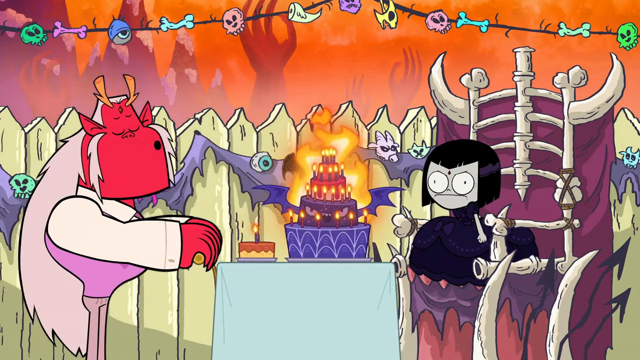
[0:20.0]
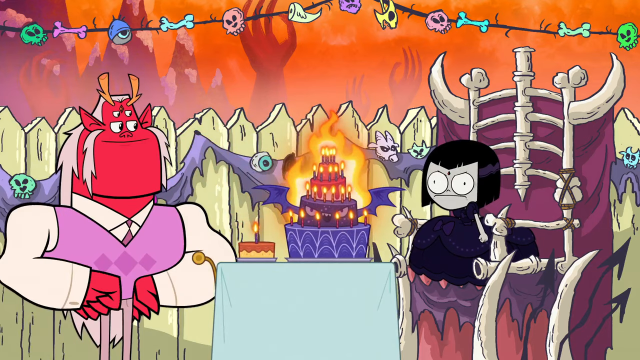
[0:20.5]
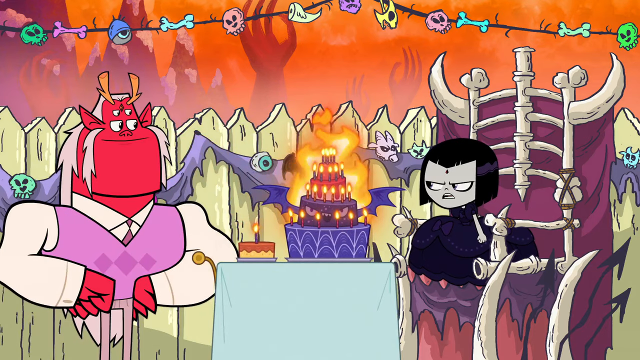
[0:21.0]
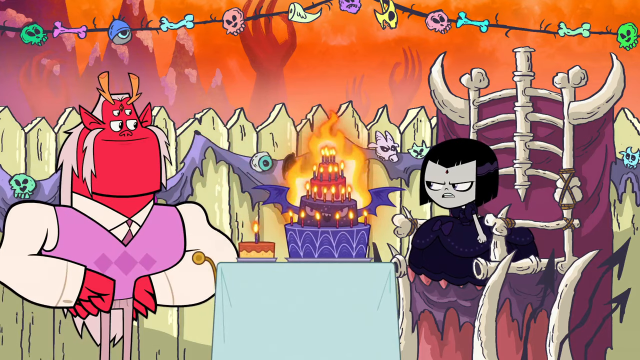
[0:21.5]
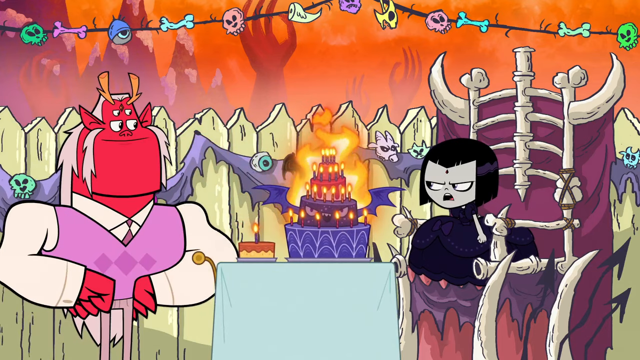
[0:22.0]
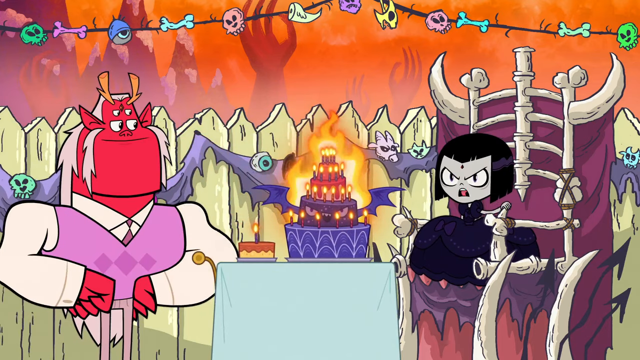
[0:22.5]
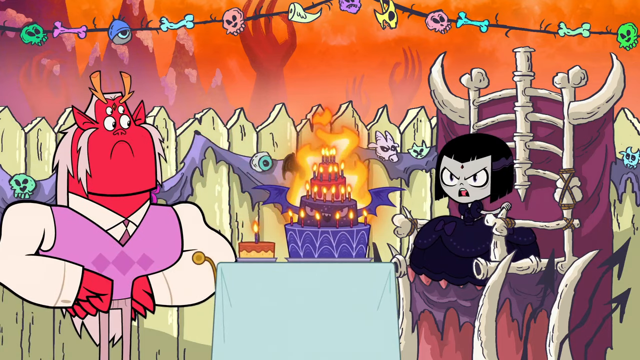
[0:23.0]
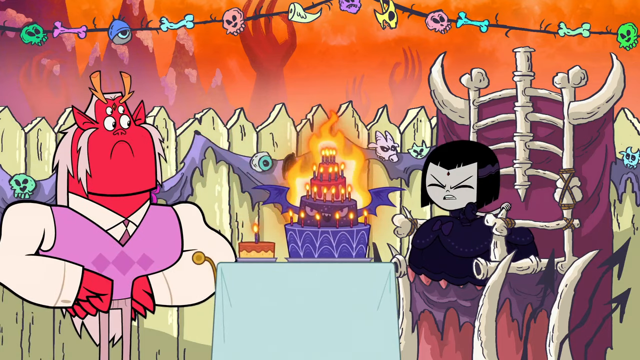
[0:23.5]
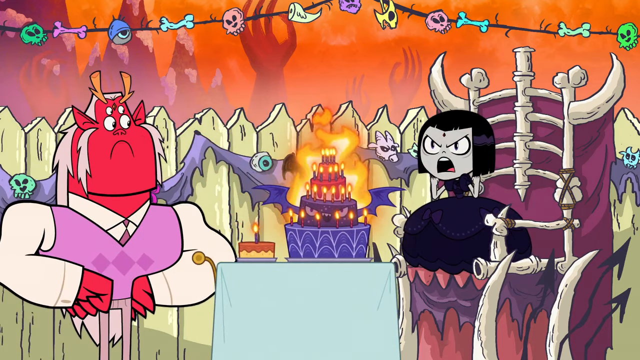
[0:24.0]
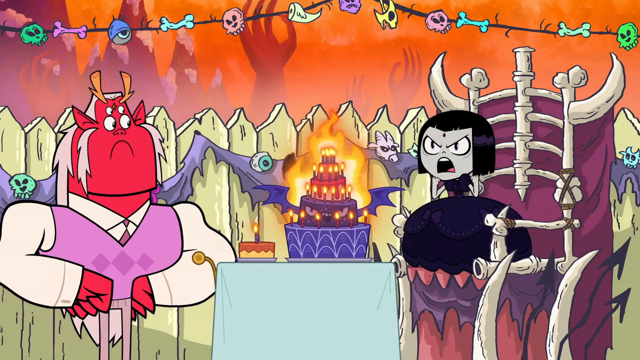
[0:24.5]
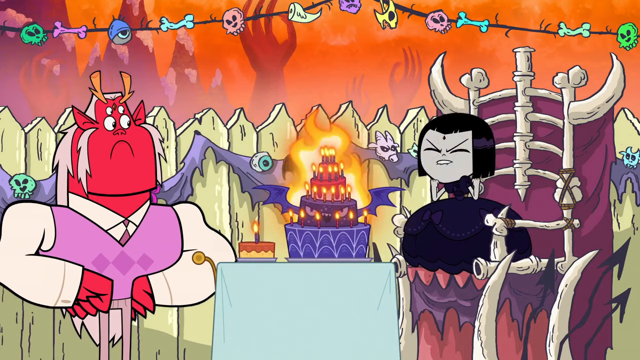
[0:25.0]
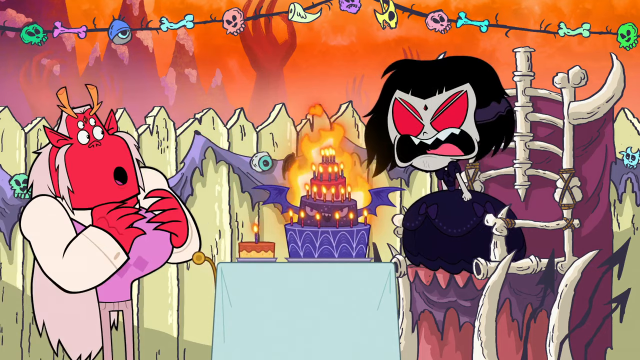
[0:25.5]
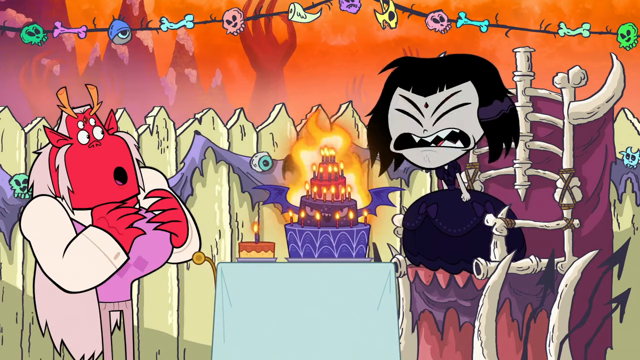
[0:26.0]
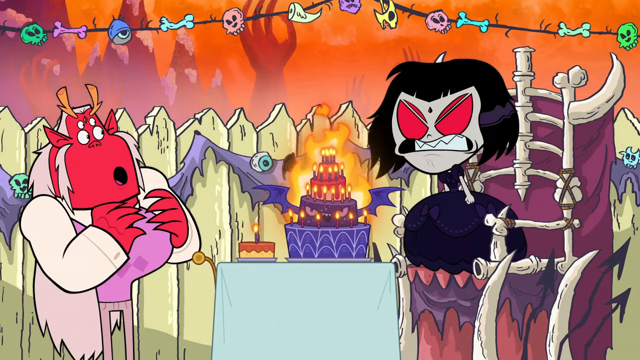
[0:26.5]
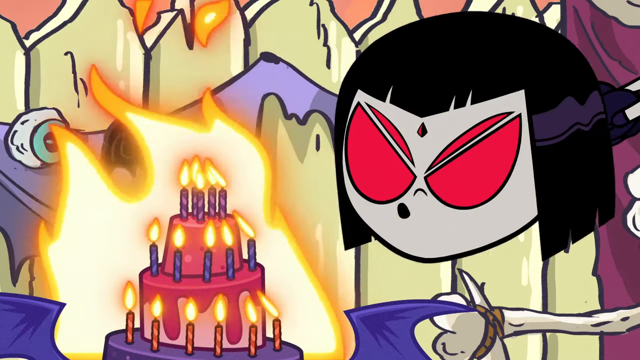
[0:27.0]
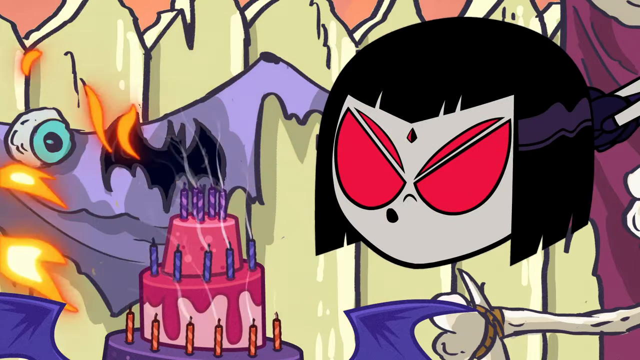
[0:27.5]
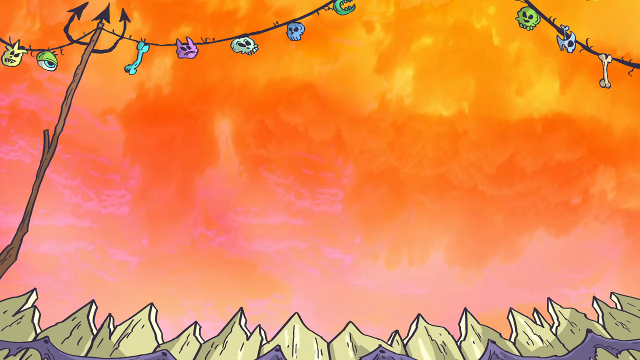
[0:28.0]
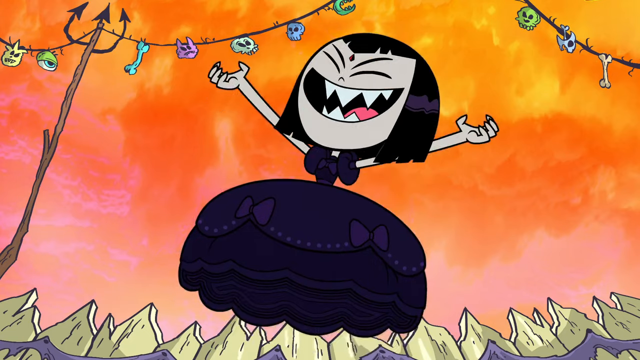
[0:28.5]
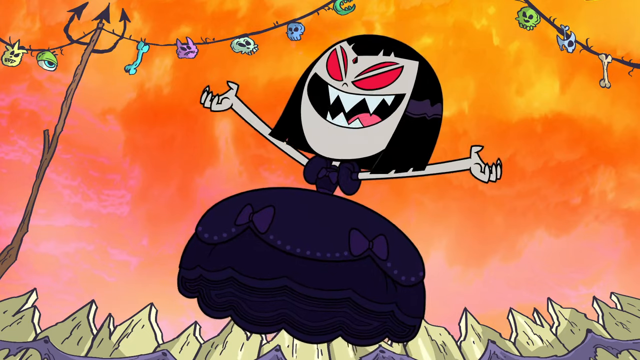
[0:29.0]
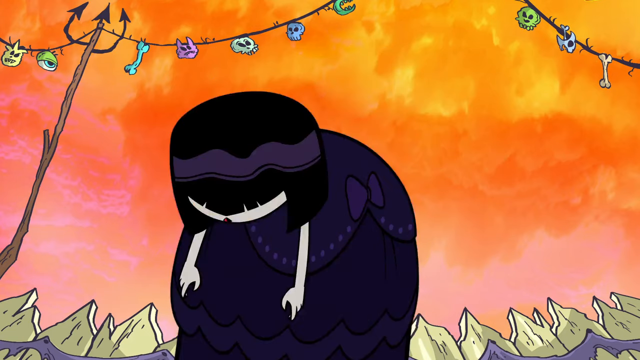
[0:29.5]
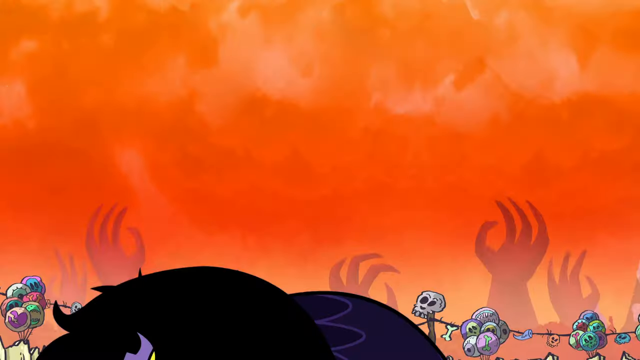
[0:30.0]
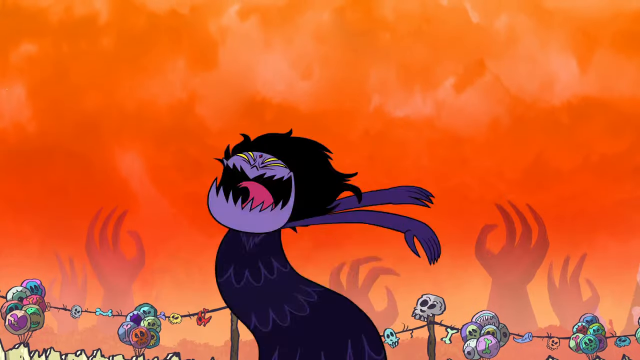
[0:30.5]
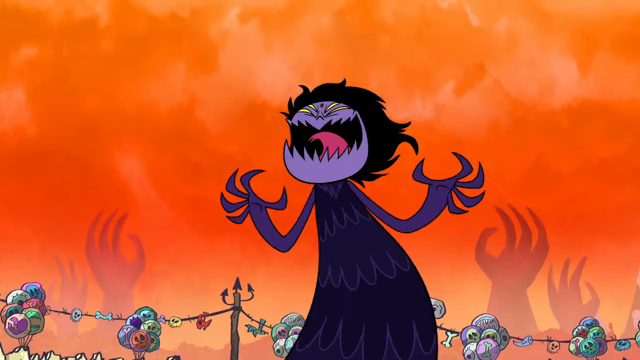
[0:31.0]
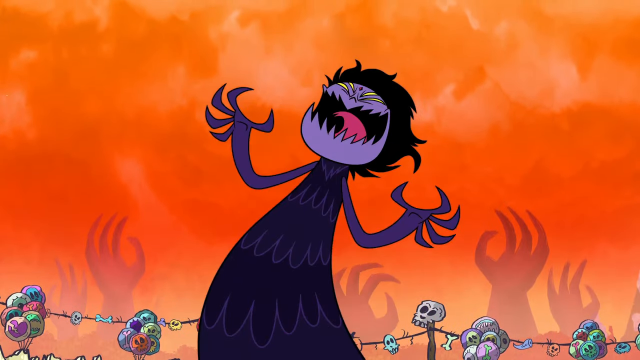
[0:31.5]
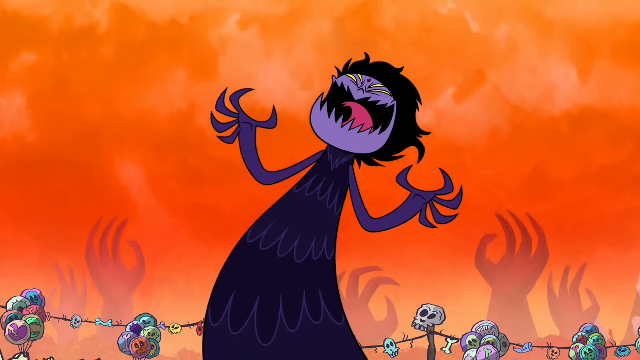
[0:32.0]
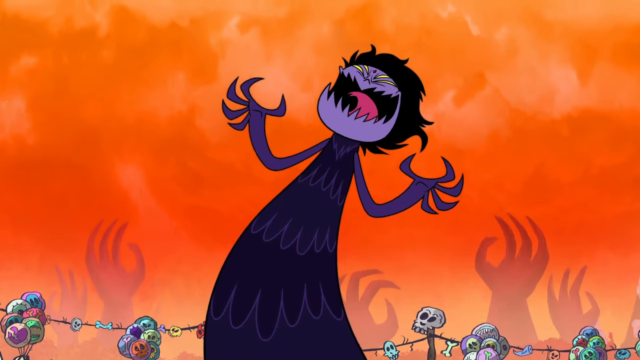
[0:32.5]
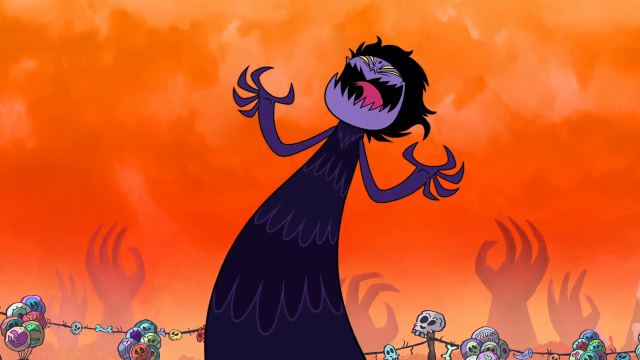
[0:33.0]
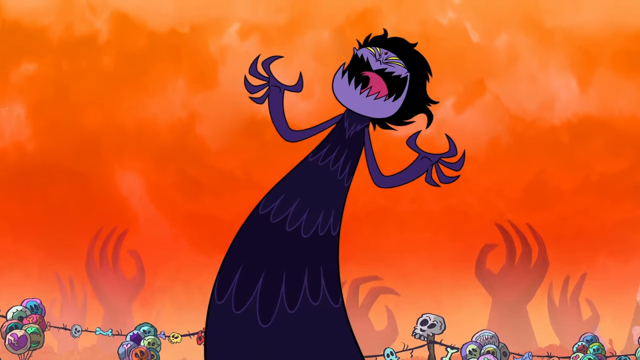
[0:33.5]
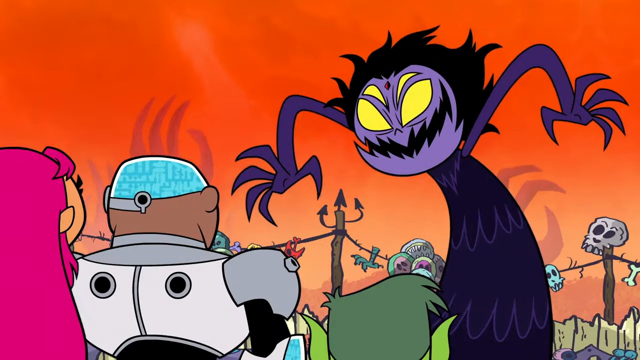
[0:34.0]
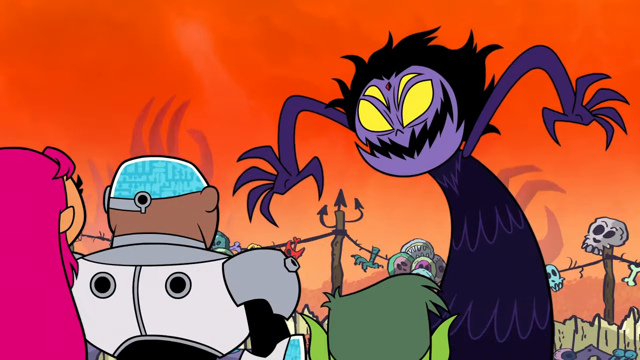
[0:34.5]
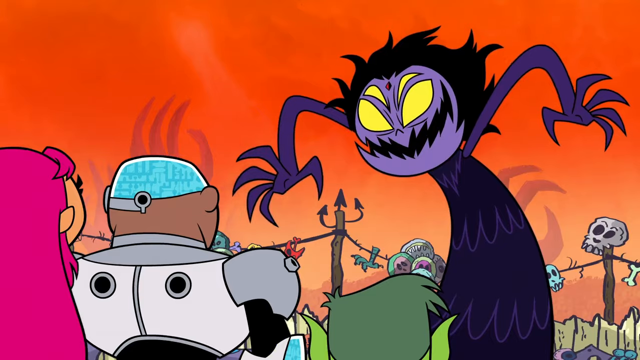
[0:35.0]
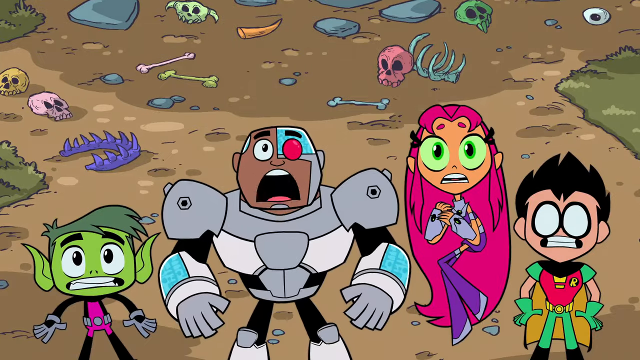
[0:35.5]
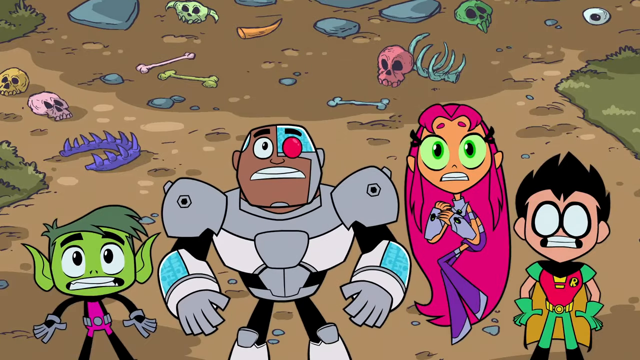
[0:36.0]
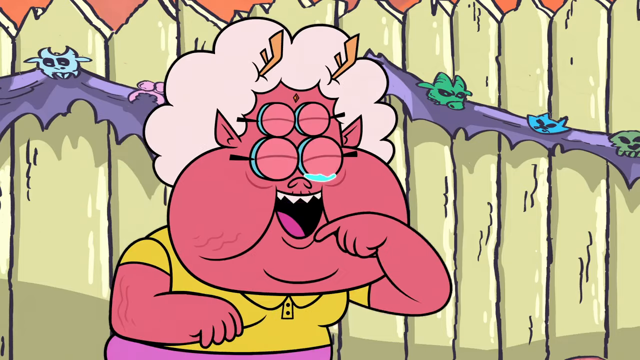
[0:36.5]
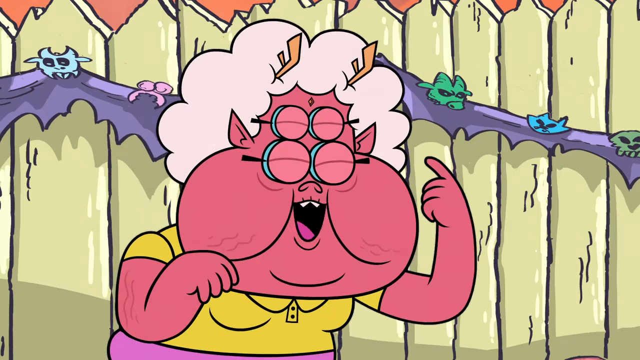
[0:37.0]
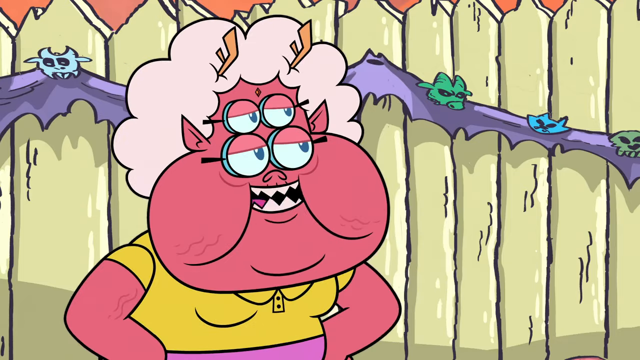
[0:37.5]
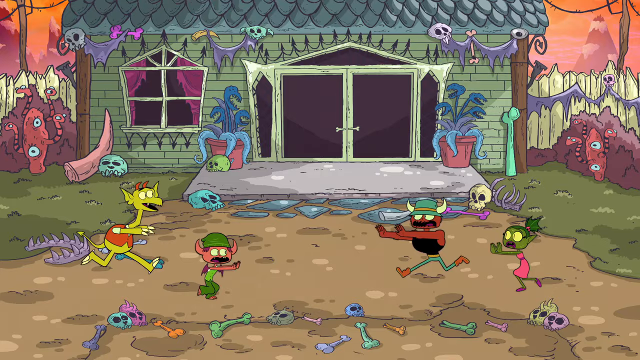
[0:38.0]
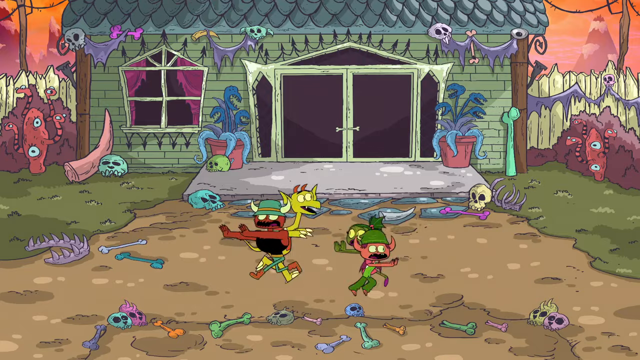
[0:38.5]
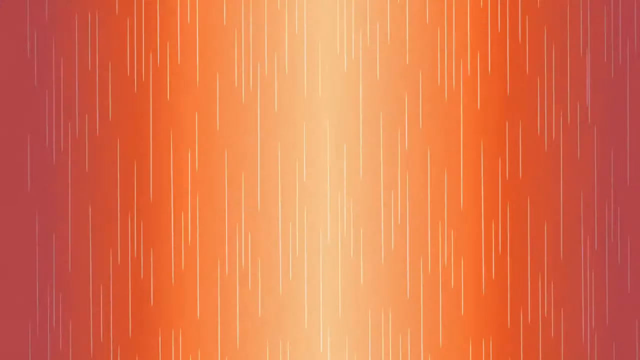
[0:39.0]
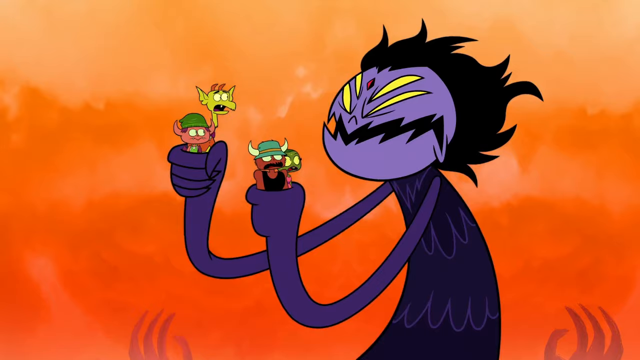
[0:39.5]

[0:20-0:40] The cake on fire is being presented to the goth girl while the devil-looking guy sings happy birthday. The girl, with black hair, big eyes and a black dress, sits on a bone throne and looks angry. The burning cake is on her tray along with a smaller cake. The red devil-looking guy wears a suit, has pink hair, and looks like he is singing happy birthday. When he finishes, the goth girl starts saying something to him, seeming very angry, and appears to start screaming. Her head becomes very big, she gets a red eye, and her mouth turns angry. The devil-looking person now has multiple eyes and horns and is kind of freaking out. Her face changes again: her neck elongates, she has red eyes and a big head, and she blows out the cake. She starts laughing, her teeth get pointy, her red eyes become squinty, and with her arms out she looks like she is doing an evil laugh. She grows, laughing even more, becoming a tall monster with weird arms and a purple face, looking ready for destruction, and keeps getting bigger. She looks at the people at the party, now with double buggy yellow eyes, her arm out as if ready to pounce. The four original guests, the green goblin, the cyborg, the lady who flies and the guy who looks like Robin, are all scared. There are bones everywhere. A character that looks like a double evil Miss Piggy, pink with double eyes, fluffy hair and big fat cheeks, is crying over what is happening, seemingly actually happy. Weird creatures in the background run, trying to escape the party, and there are other weird figures in the background such as dead skulls and weird animals. The goth girl turned monster picks up the running figures and holds them, looking like she is going to eat them, while they scream.